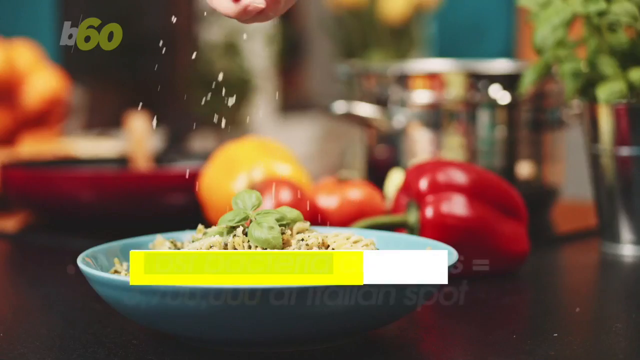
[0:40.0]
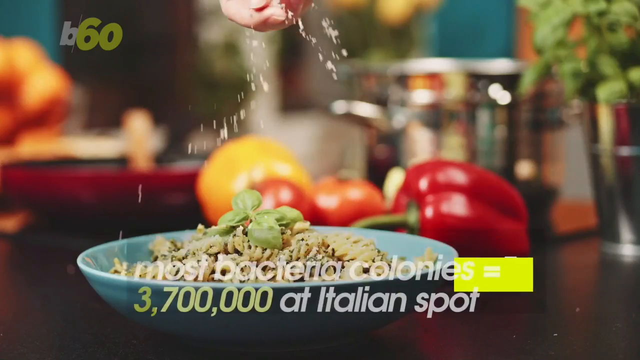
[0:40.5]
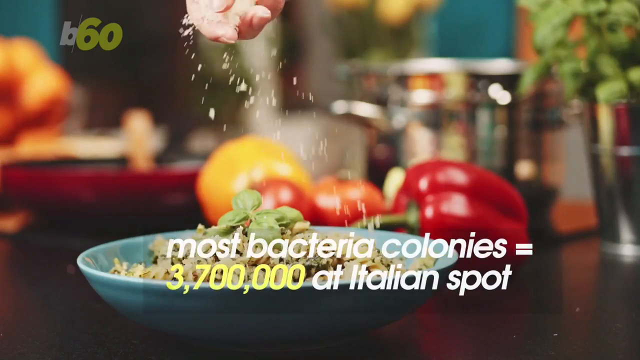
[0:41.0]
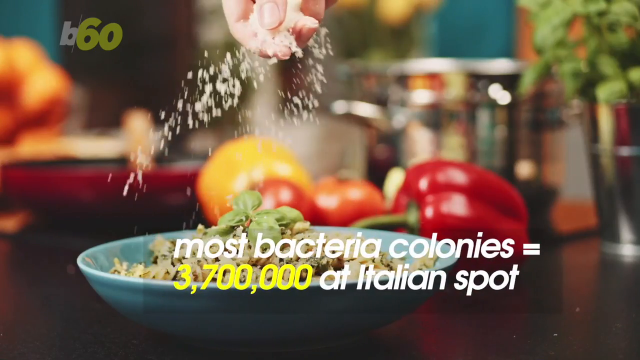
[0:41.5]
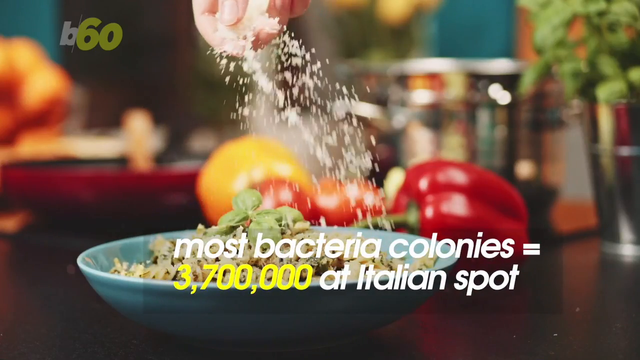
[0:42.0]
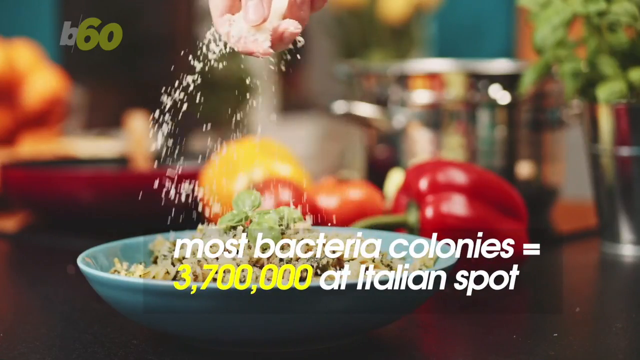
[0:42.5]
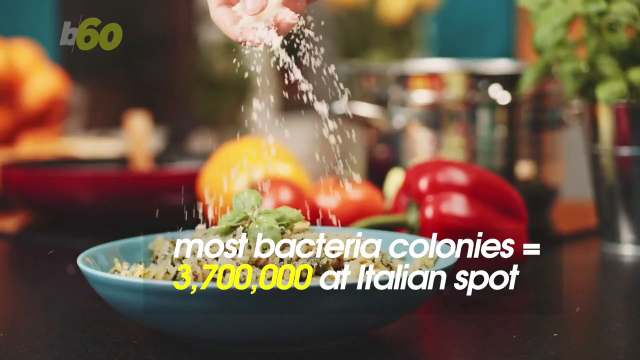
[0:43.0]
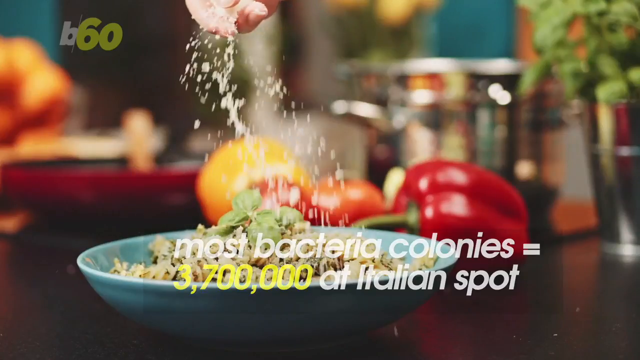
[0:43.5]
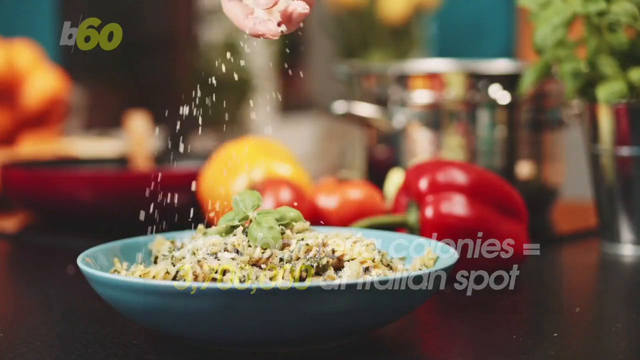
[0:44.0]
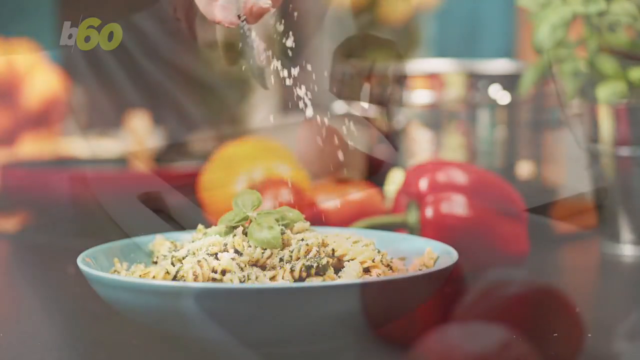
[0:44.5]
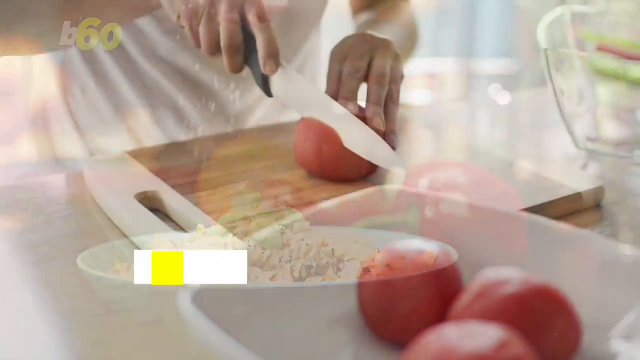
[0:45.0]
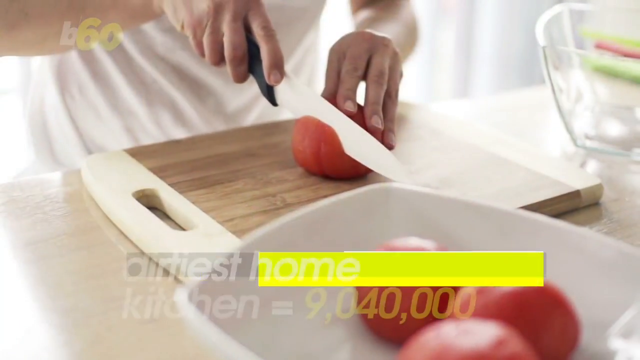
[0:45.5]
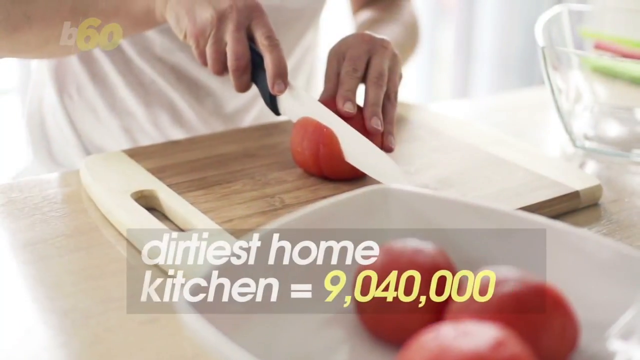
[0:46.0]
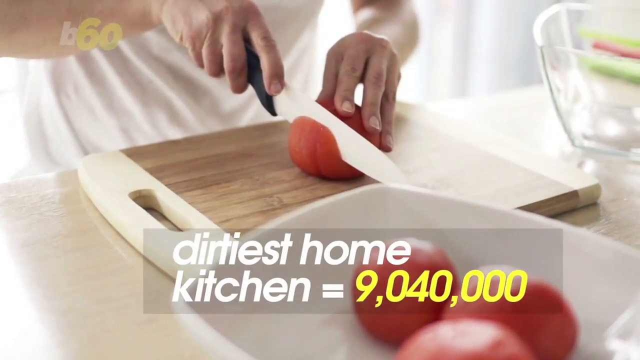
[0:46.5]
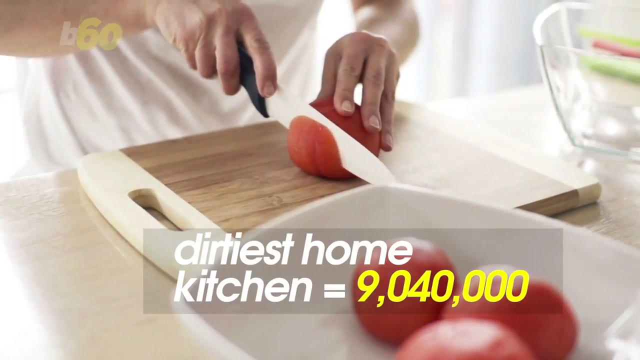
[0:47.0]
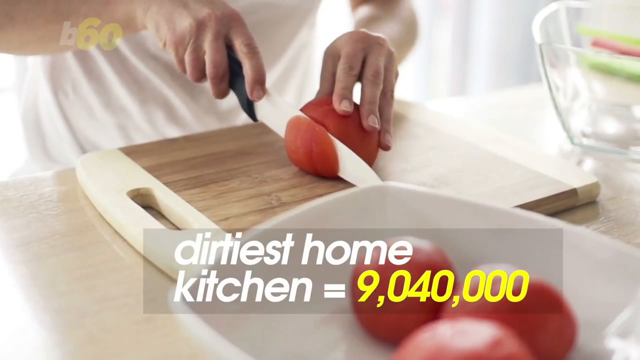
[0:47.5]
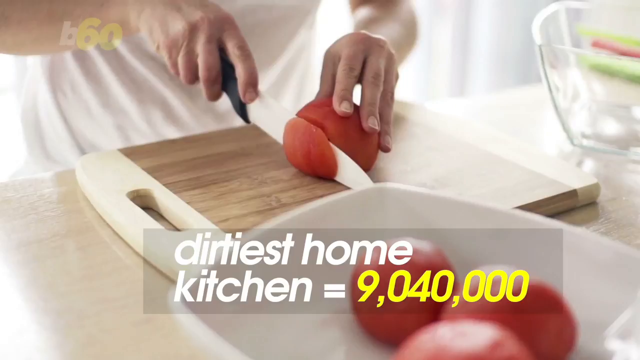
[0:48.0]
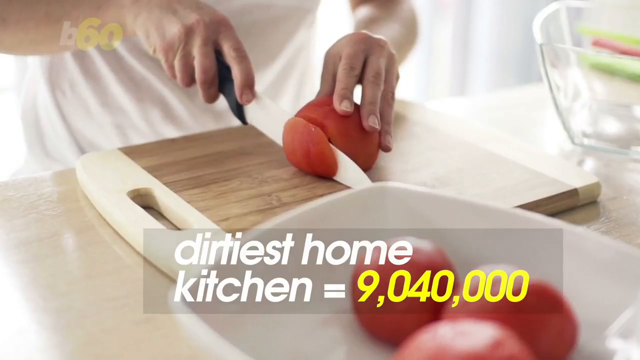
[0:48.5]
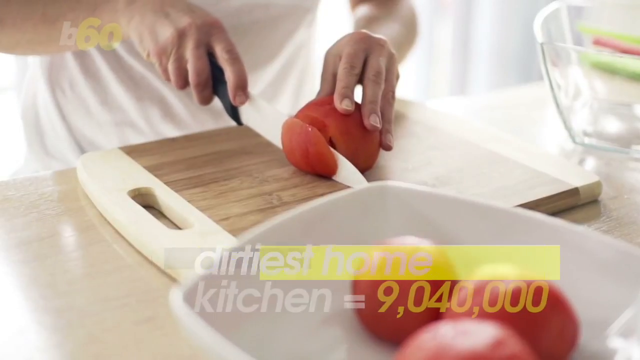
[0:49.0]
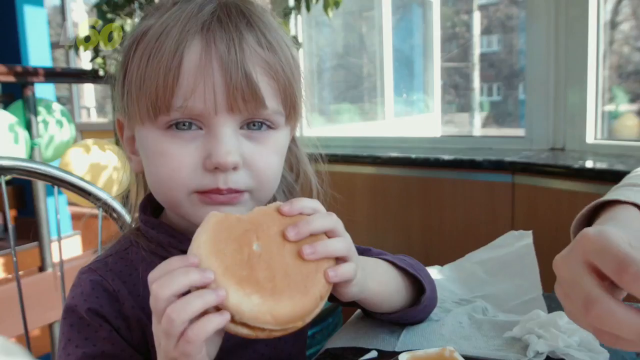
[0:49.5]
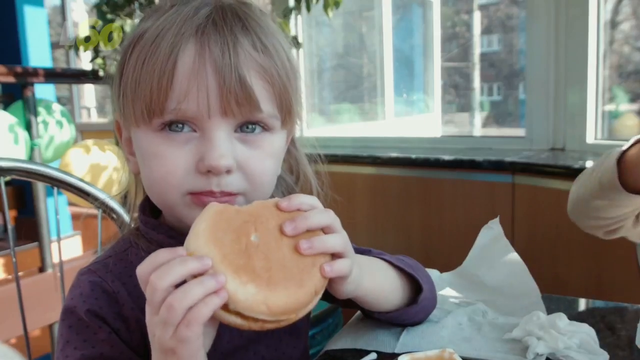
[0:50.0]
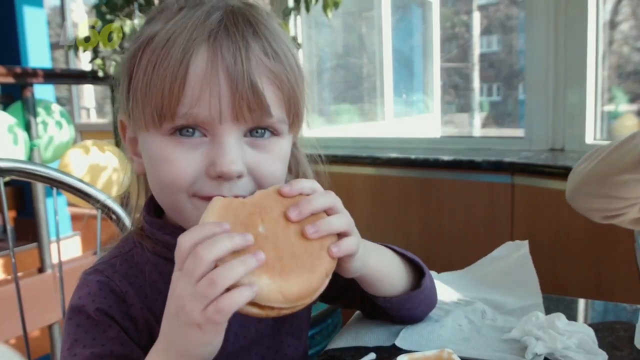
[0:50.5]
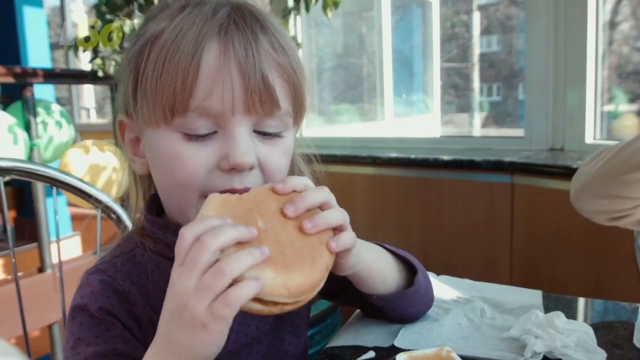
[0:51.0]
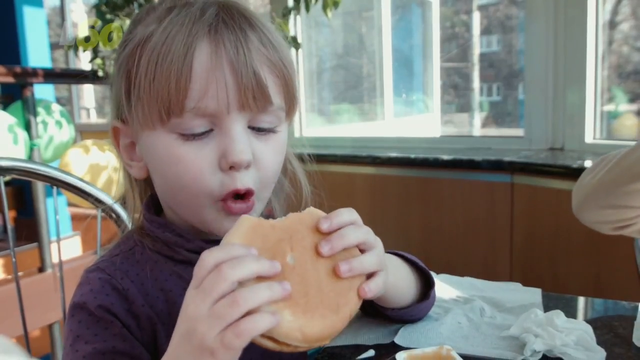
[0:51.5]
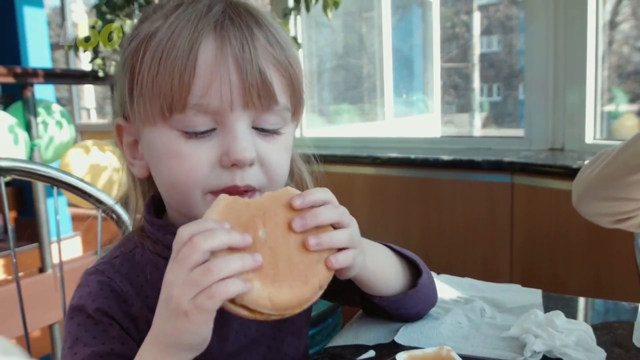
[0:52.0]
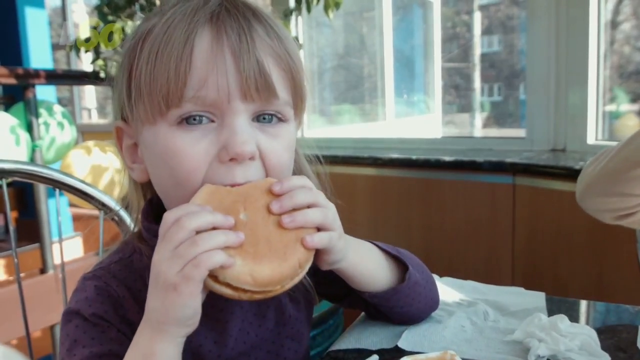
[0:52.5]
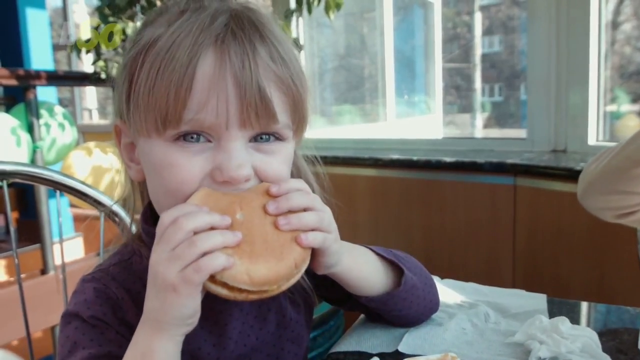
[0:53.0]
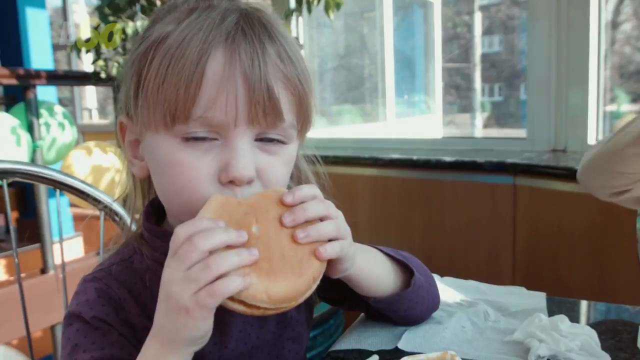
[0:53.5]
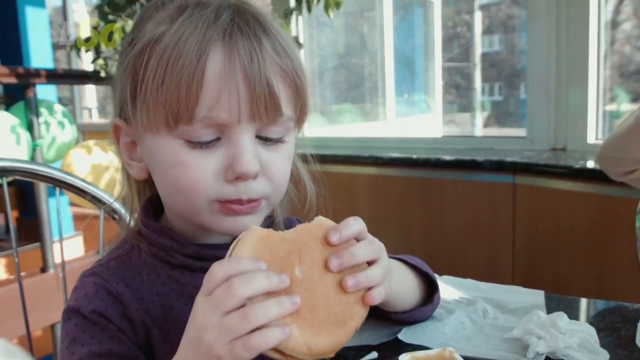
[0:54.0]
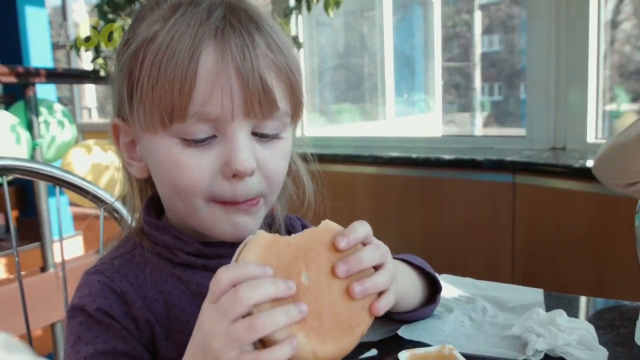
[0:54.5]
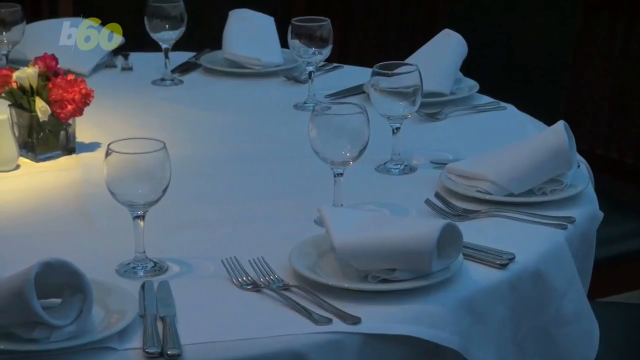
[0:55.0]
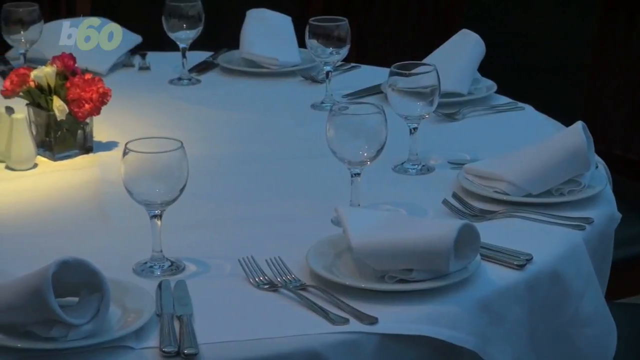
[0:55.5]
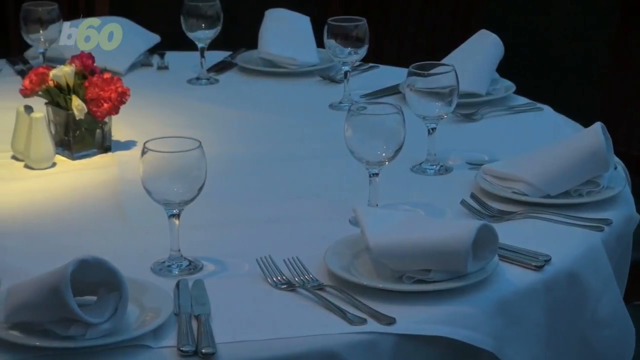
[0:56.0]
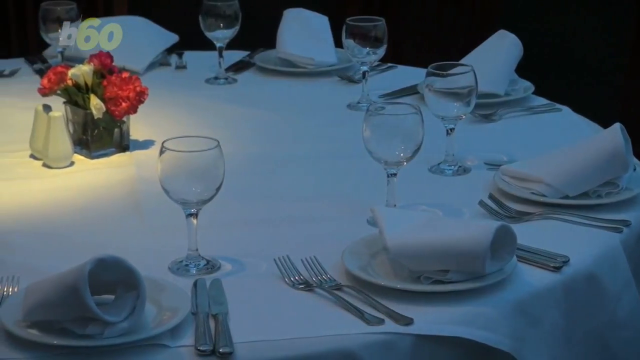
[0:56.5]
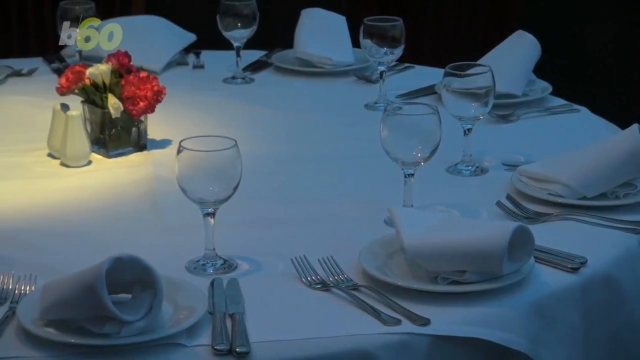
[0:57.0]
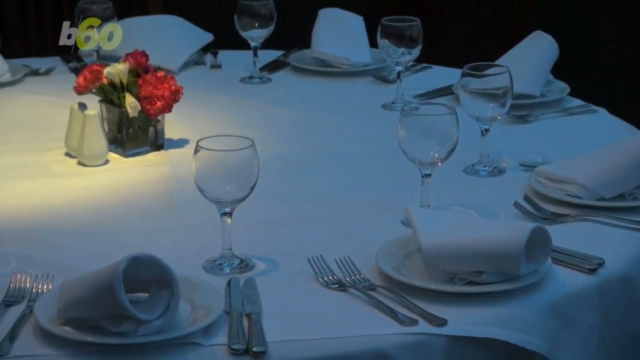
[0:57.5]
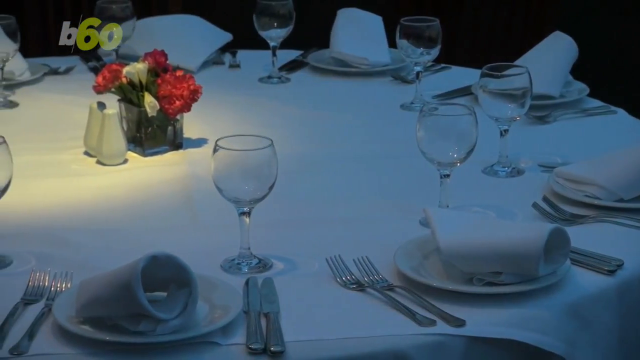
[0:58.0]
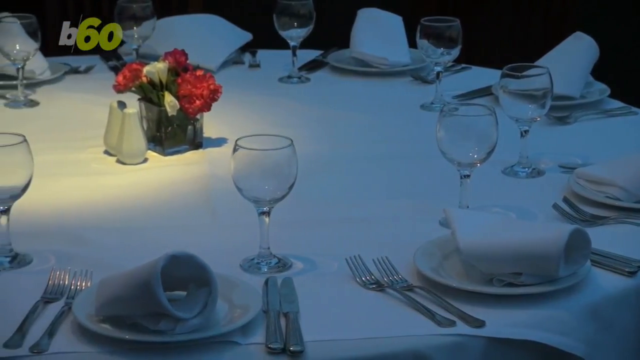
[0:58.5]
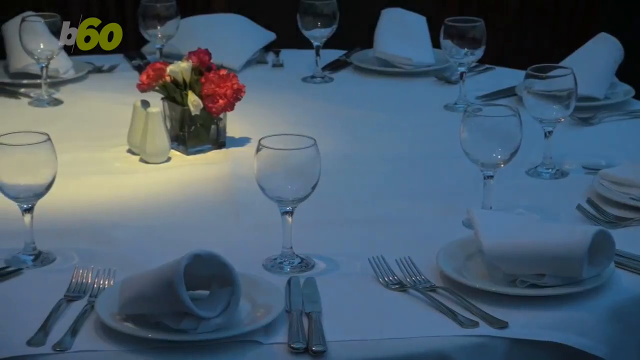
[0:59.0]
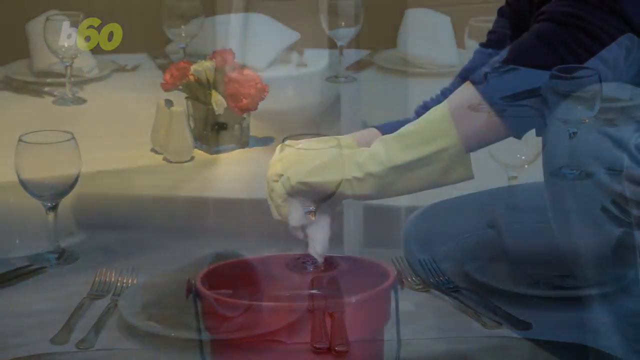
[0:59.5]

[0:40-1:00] An Italian dish is being made, with a lot of cheese and salt being put on it. Text reads "most bacteria colonies = 3,700,000," followed by "dirtiest home kitchen equals 9,000,040,000." A person slices a tomato in their kitchen, and then a little kid eats a big hamburger at a restaurant. A fancy restaurant with a set table follows. Very briefly, somebody is shown cleaning inside what looks almost like a bathroom, though it might be a kitchen; they have a red bucket of water, are wringing a rag and are bending down.